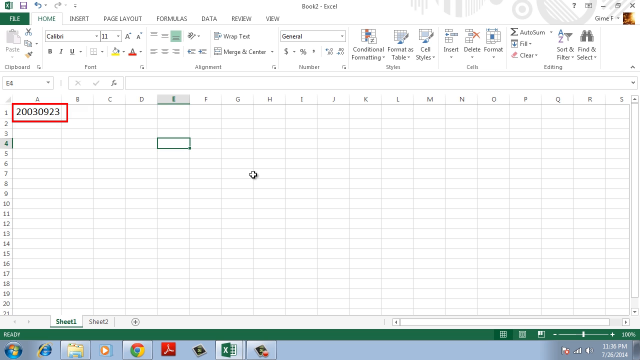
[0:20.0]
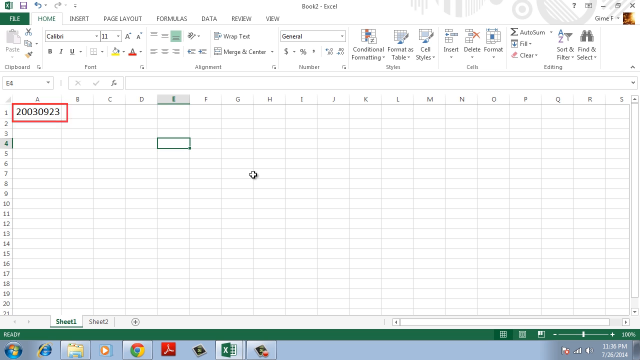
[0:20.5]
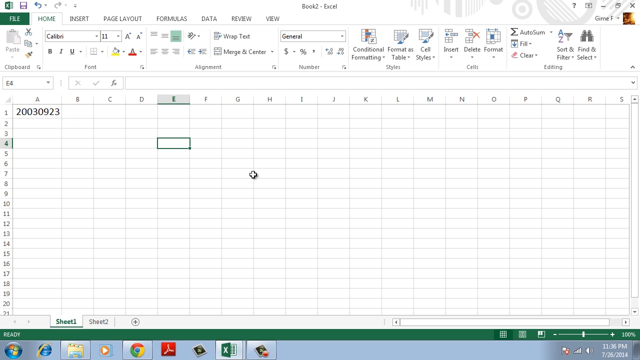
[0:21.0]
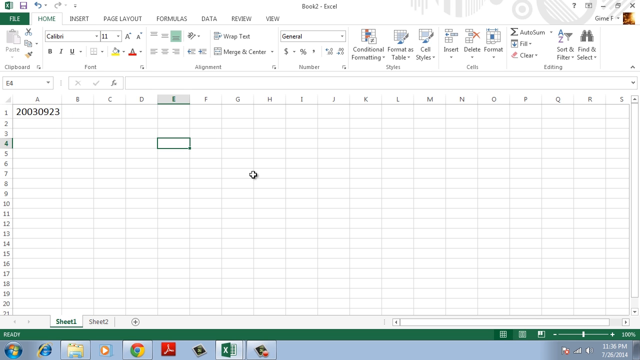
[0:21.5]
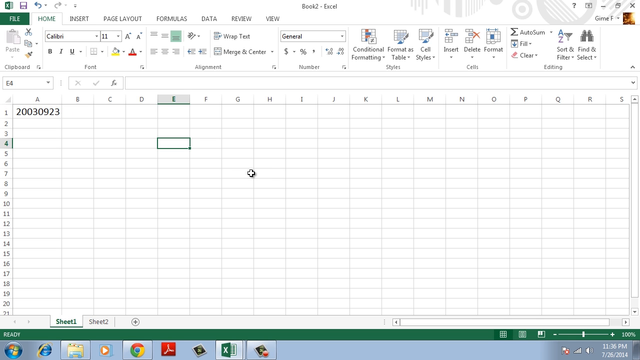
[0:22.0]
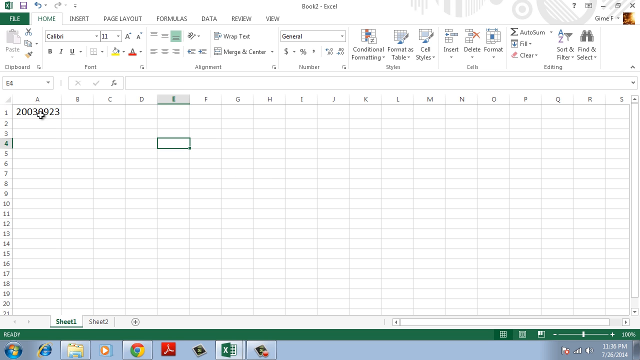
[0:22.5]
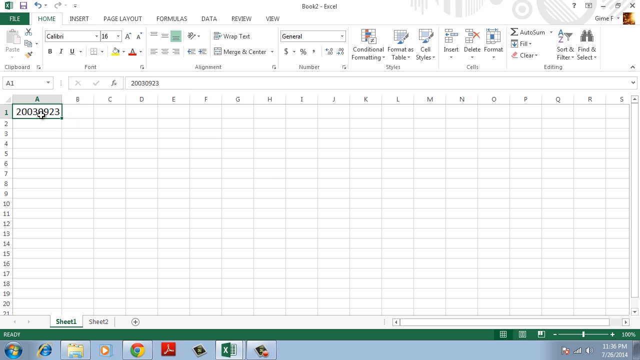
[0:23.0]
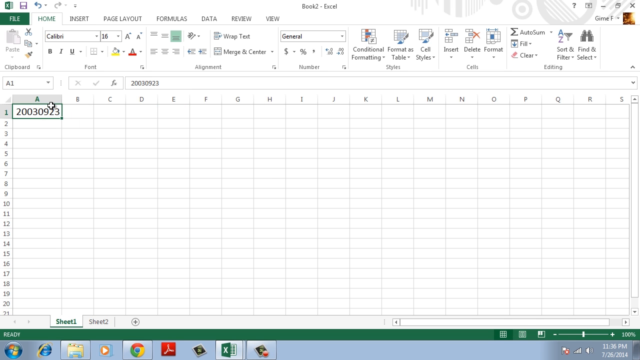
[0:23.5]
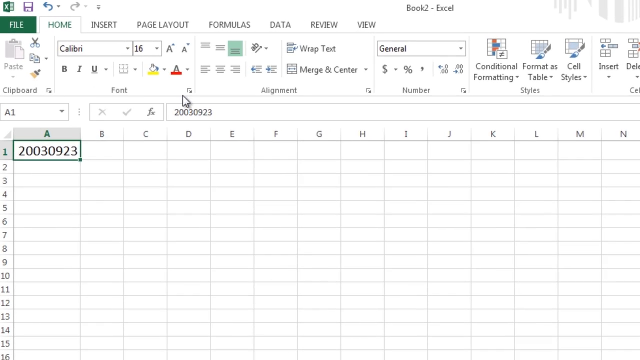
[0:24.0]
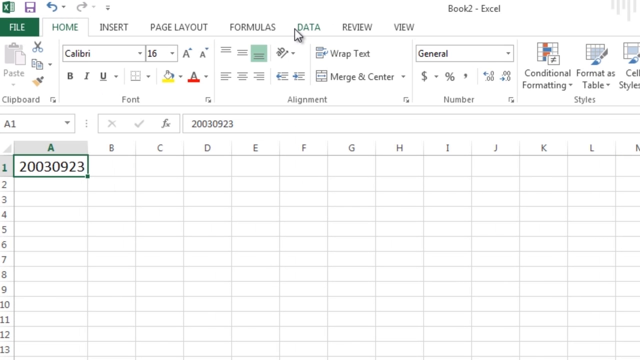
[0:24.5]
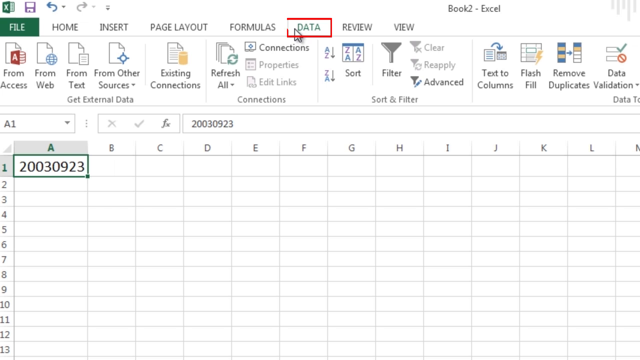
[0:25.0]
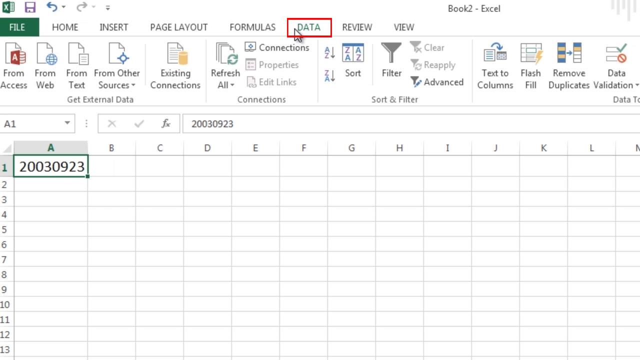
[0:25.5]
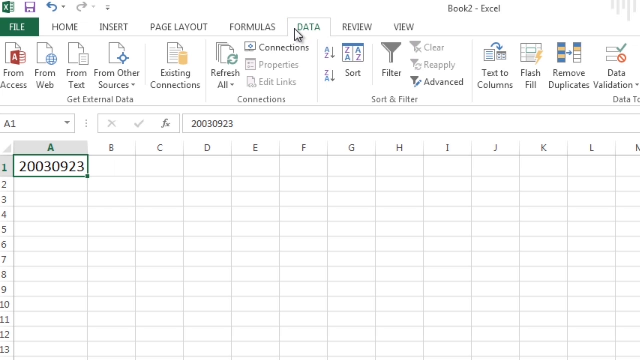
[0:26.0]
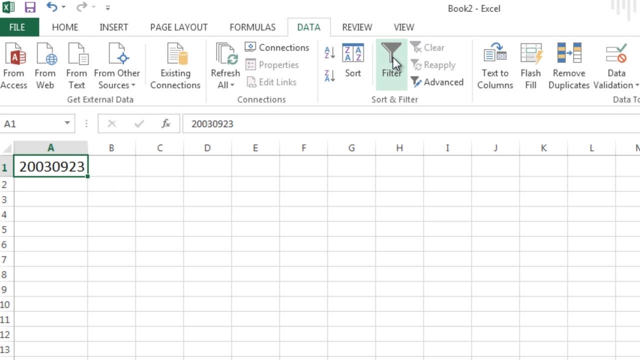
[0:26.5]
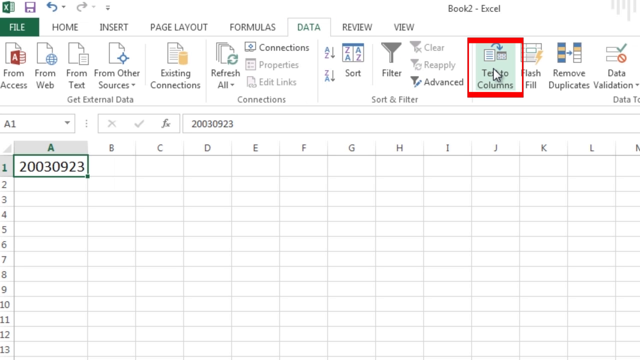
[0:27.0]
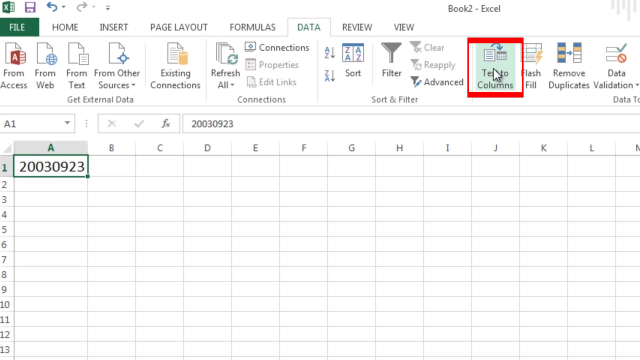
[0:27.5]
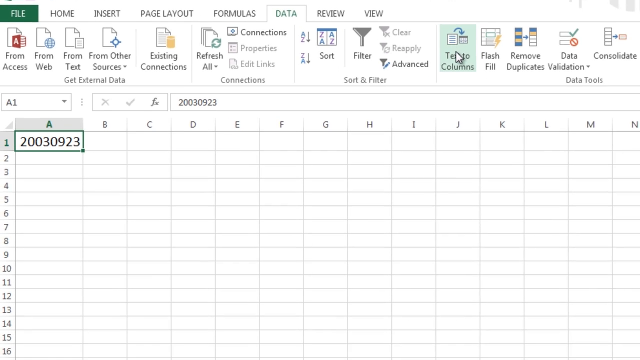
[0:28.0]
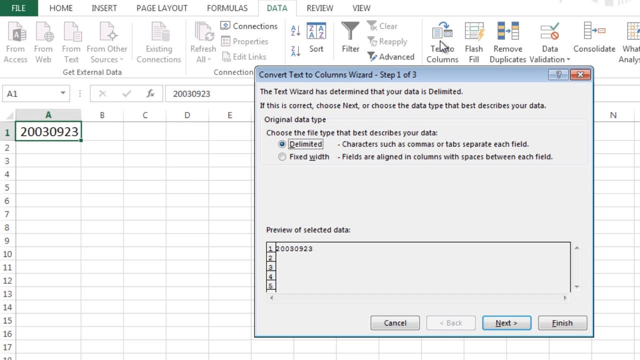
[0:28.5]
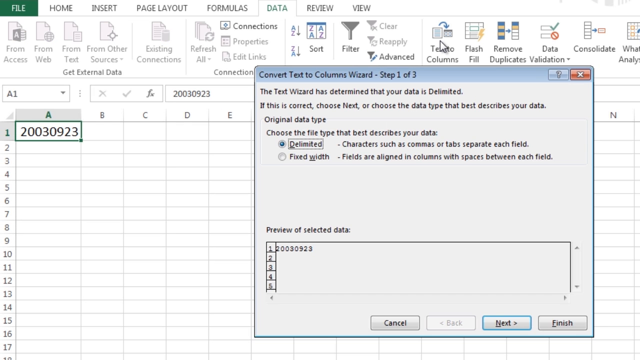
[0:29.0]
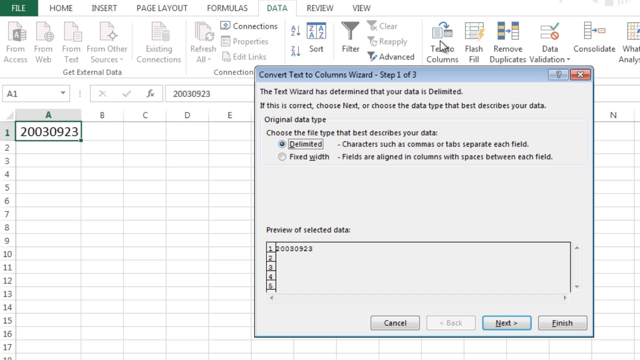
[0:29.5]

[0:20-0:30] The video stays in the Excel file and zooms in on the first row of the column where the numbers 20030923 were typed. The Data tab in the ribbon at the top of the screen is clicked, then Text to Columns, which opens a menu box listing the criteria for converting text into columns. One option reads "delimited" with the description "characters such as commas or tabs separate each field", and another is "fixed width". Delimited is currently selected. A preview of the selected data shows only the one cell that contains text. No format has been chosen for the conversion yet.